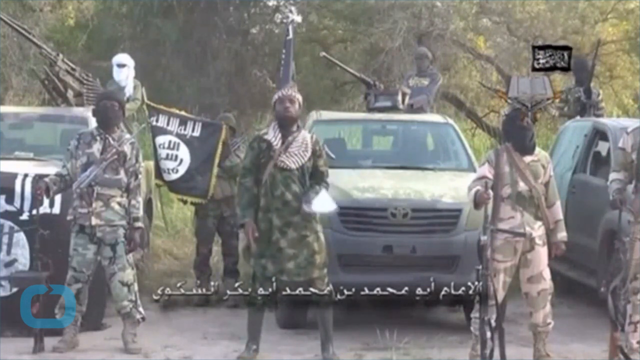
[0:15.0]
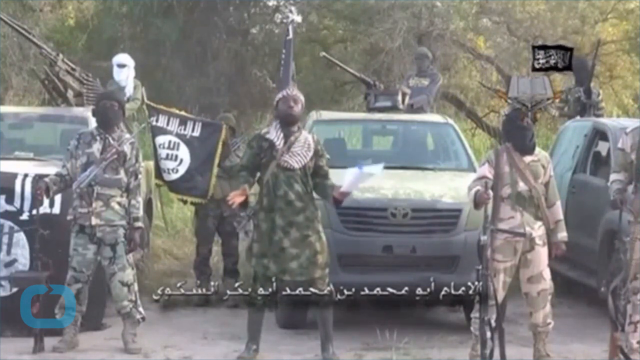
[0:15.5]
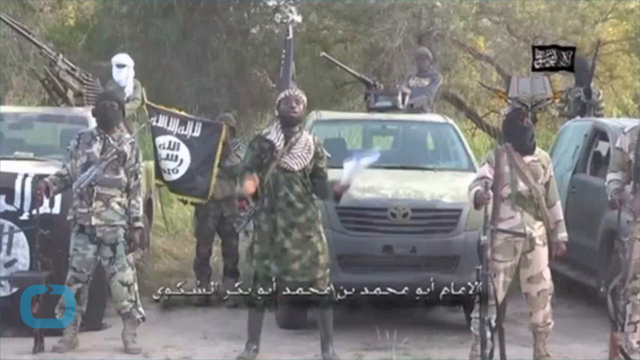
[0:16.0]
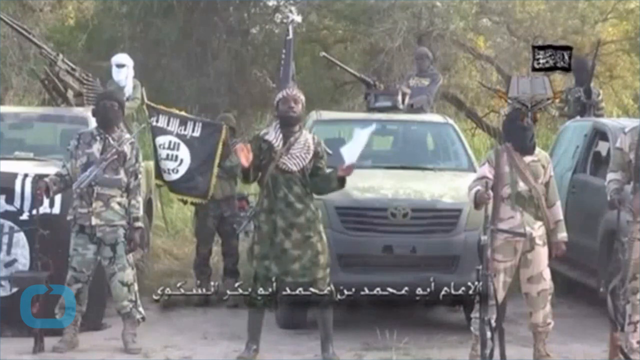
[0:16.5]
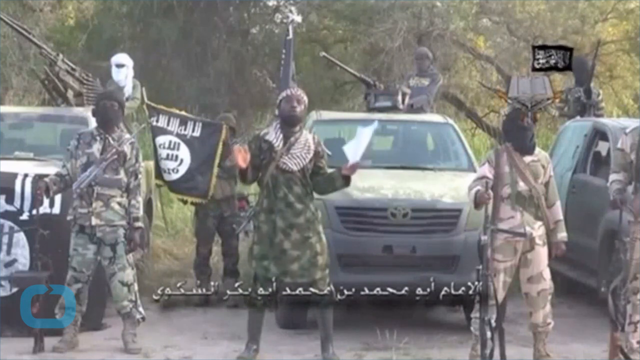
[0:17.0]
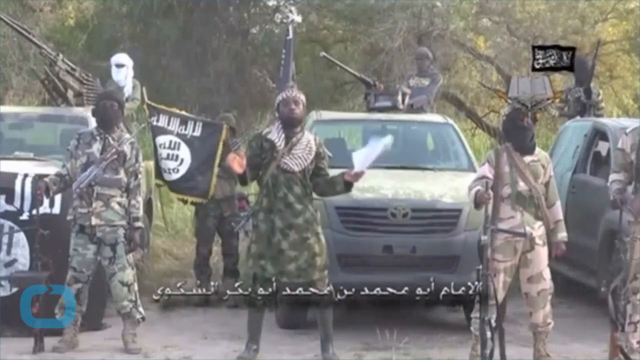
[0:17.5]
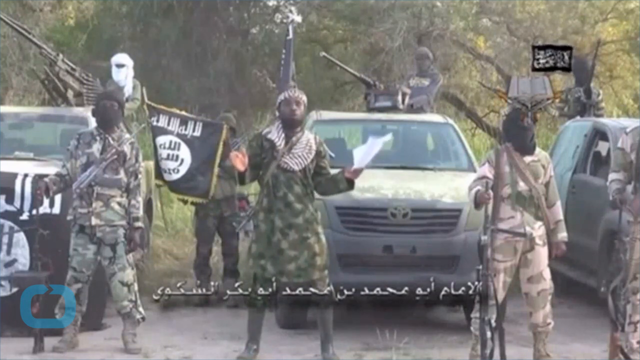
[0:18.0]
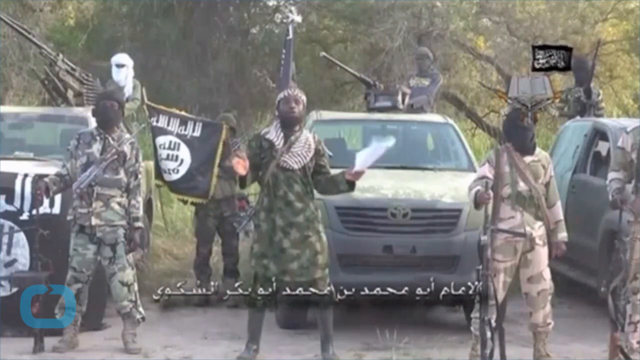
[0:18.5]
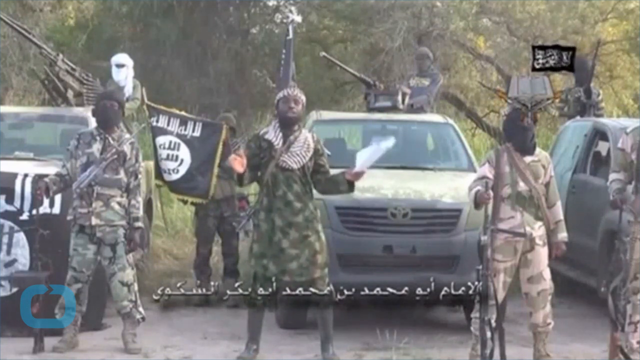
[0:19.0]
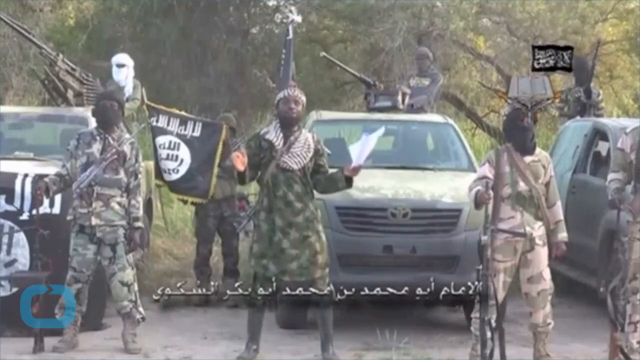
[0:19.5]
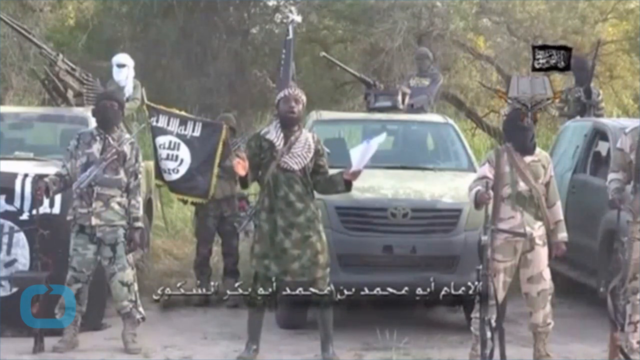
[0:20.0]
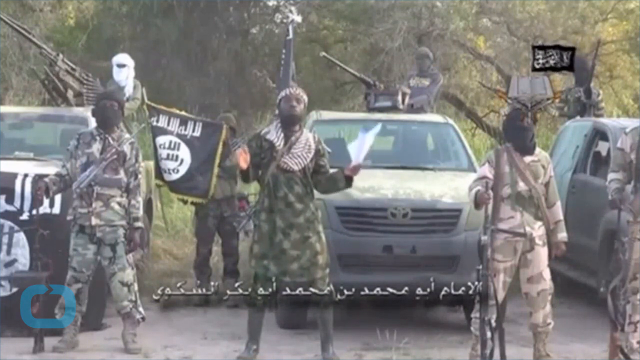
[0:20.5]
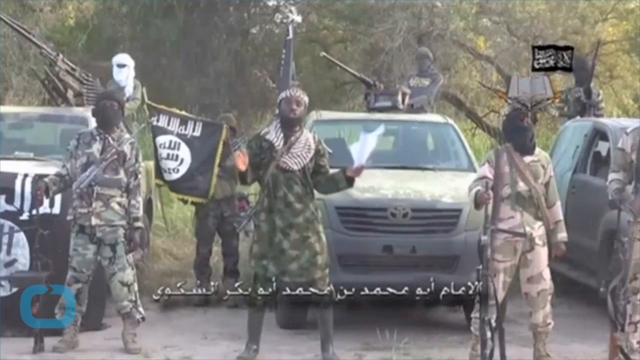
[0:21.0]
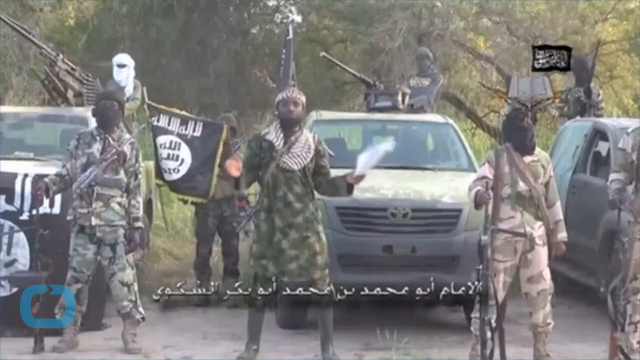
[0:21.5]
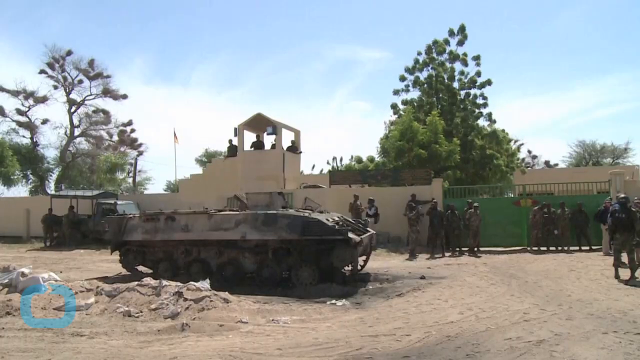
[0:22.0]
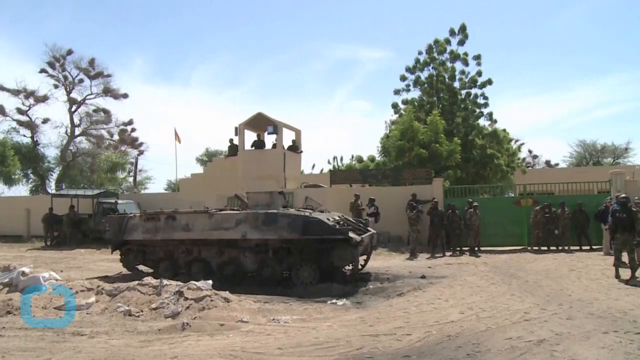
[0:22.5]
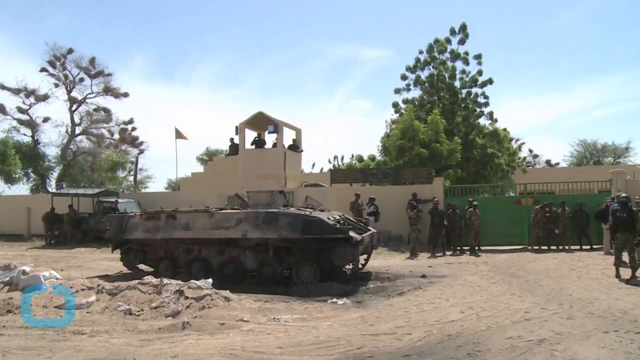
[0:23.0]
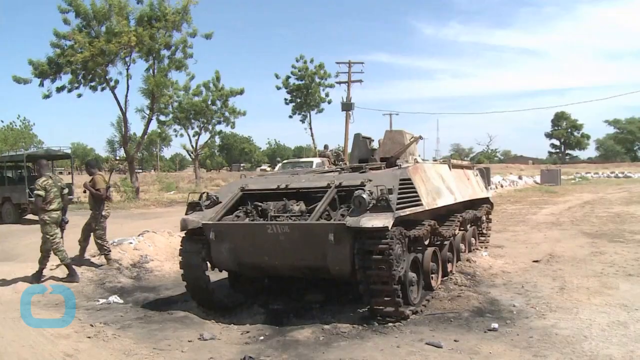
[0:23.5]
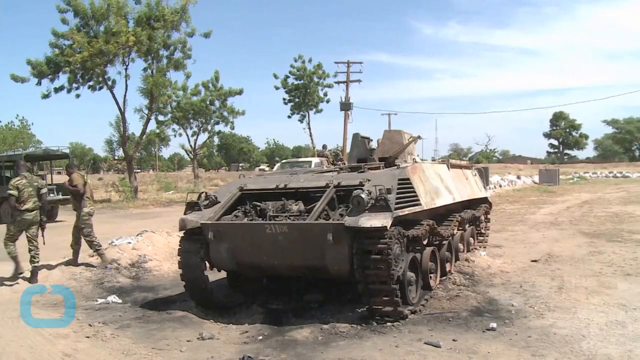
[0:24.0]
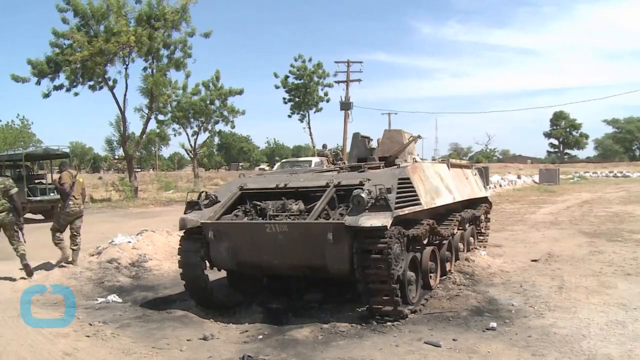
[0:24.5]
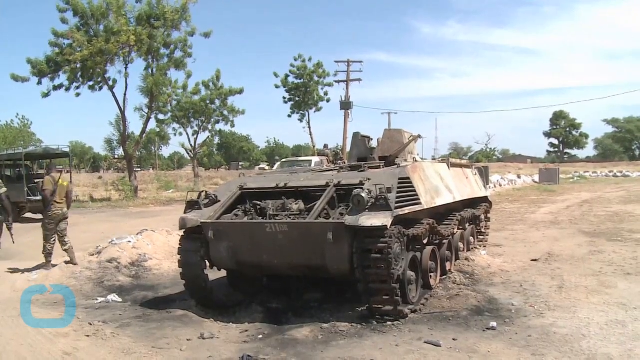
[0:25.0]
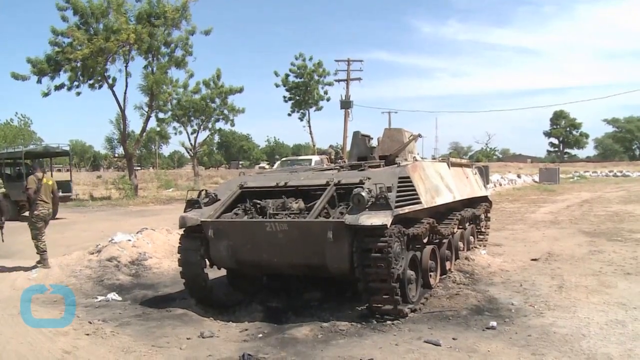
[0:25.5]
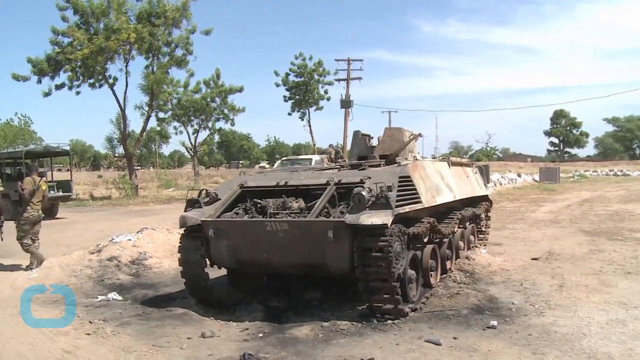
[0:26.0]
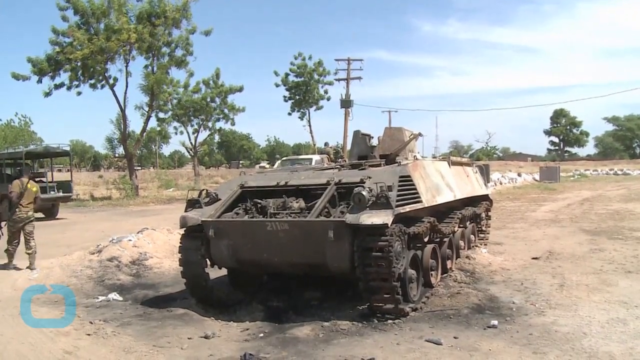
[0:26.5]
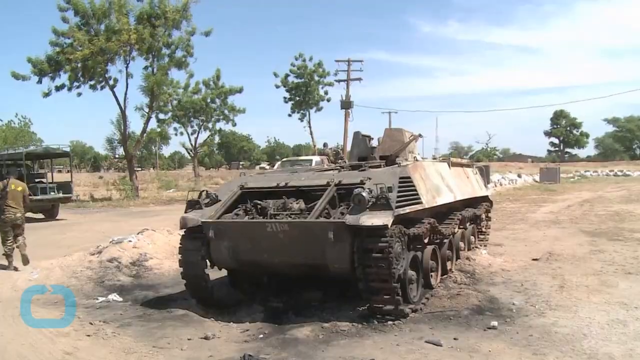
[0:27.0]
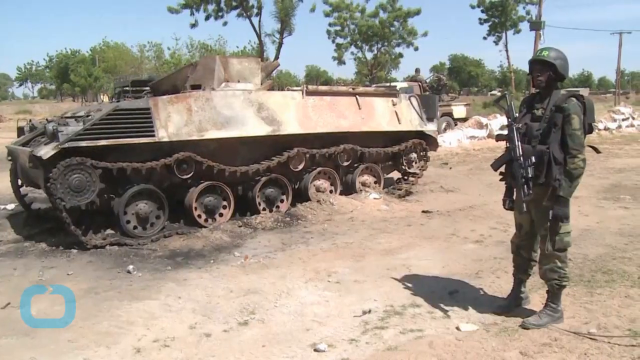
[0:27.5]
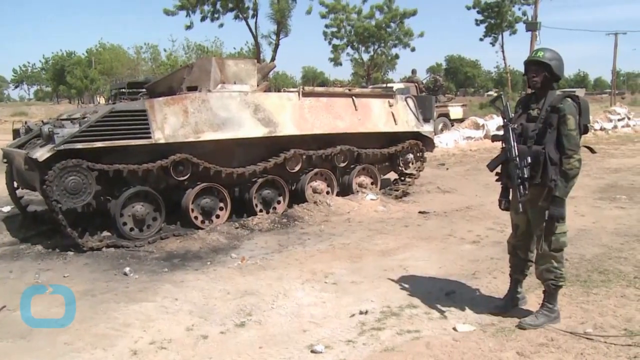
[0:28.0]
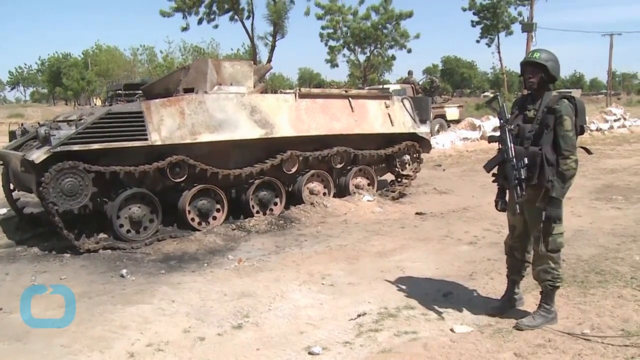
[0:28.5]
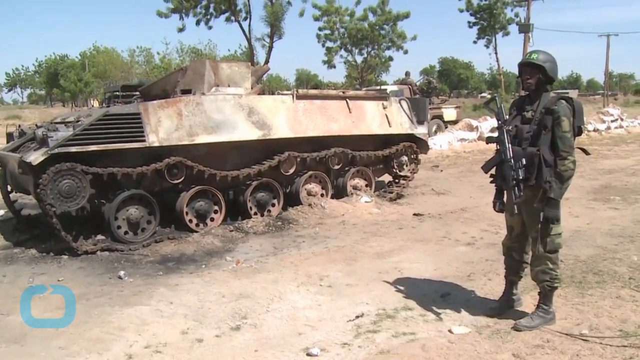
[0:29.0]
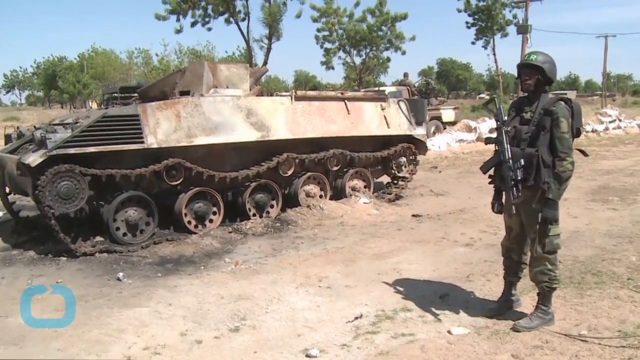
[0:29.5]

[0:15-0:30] The same scene continues: the man in green camouflage is pleading and speaking with passion, holding the piece of paper in his hand. The scene cuts to a tank, with two soldiers walking away from it carrying guns. The tank appears to be stuck in the sand or broken down, as if it has been there a long time, with sand piling up around its tracks. The video cuts back to the man with the paper in his hand, then to a wider, zoomed-out shot showing the tank, some of the soldiers, a wall, and possibly a small watchtower. A country's flag is visible, but which country it belongs to is unclear. The tank does not appear to be operable.